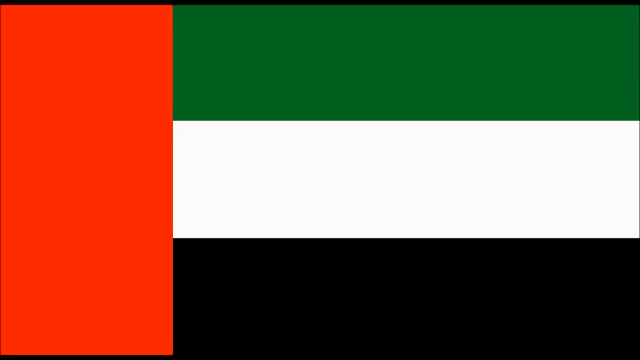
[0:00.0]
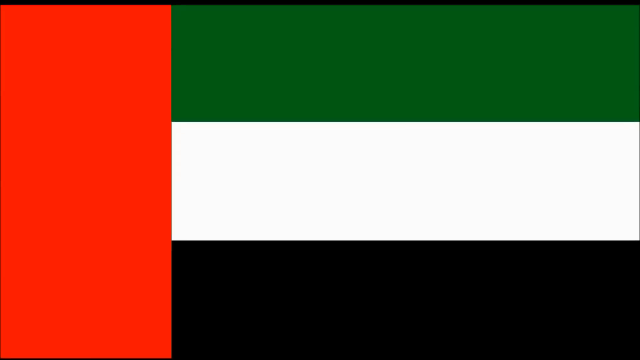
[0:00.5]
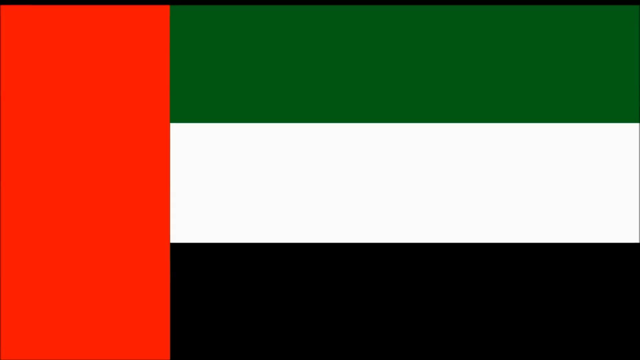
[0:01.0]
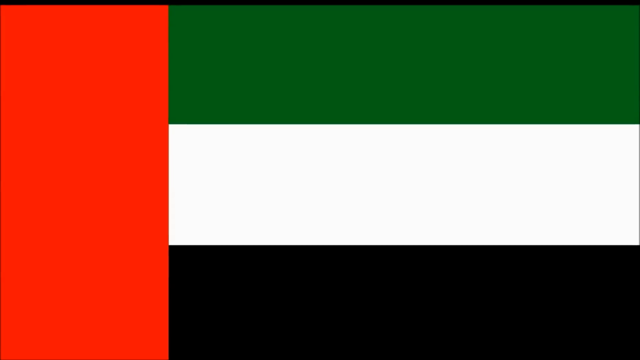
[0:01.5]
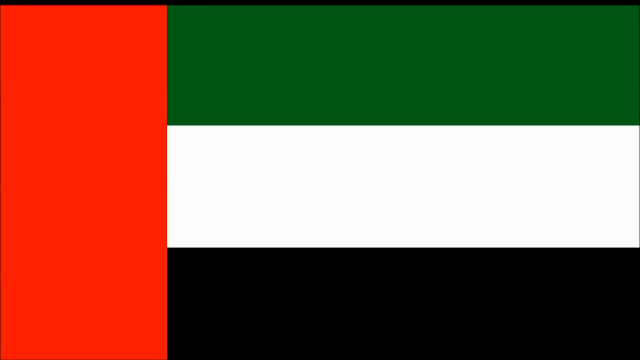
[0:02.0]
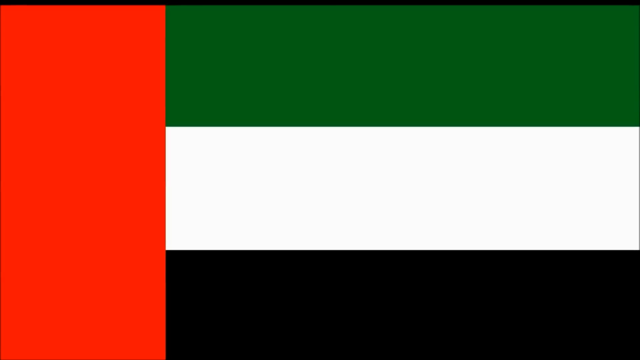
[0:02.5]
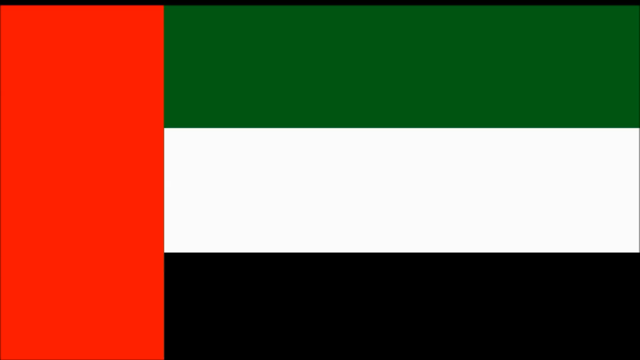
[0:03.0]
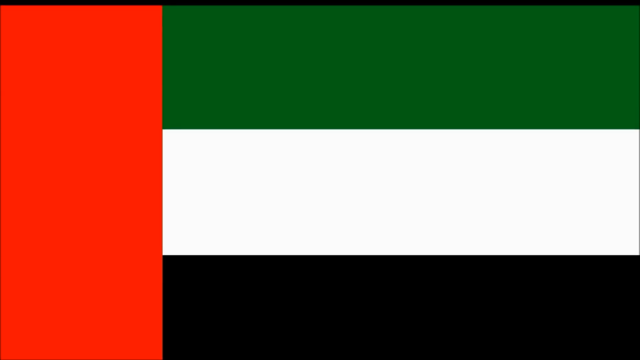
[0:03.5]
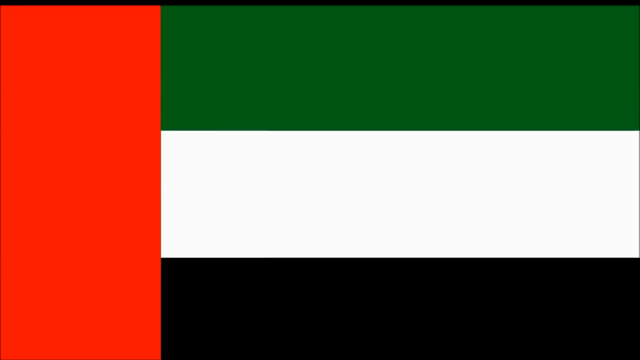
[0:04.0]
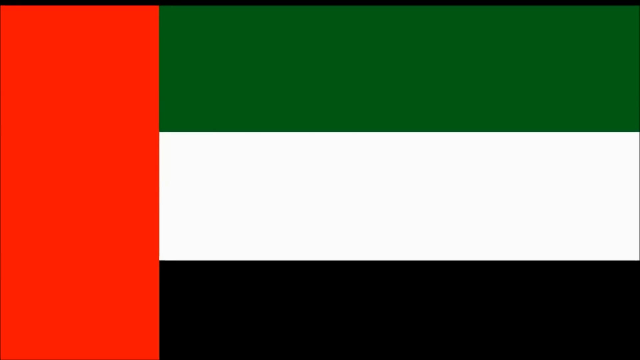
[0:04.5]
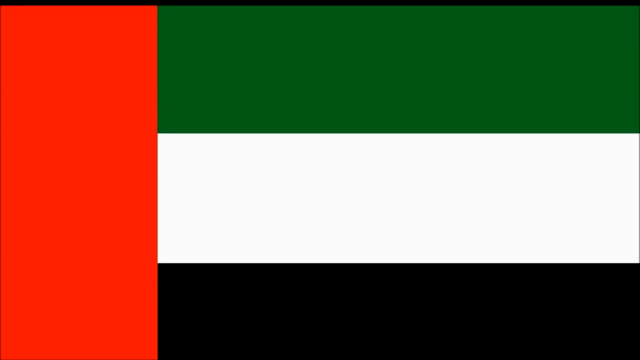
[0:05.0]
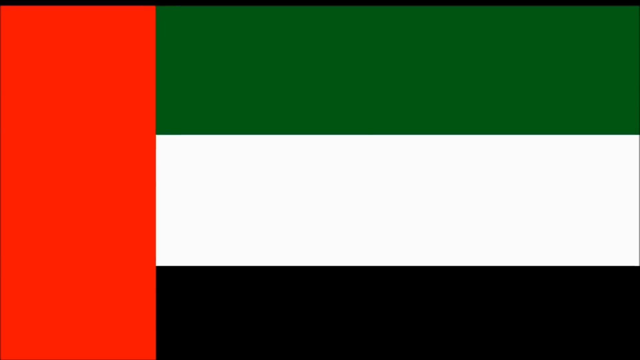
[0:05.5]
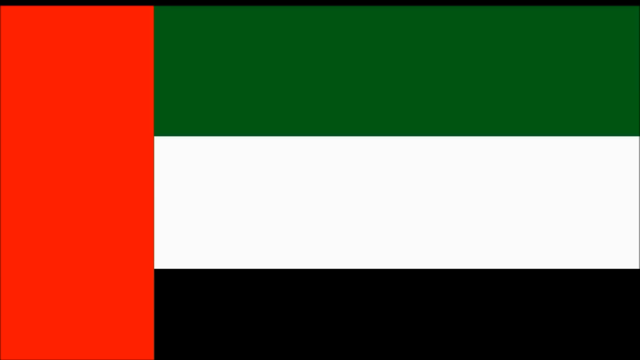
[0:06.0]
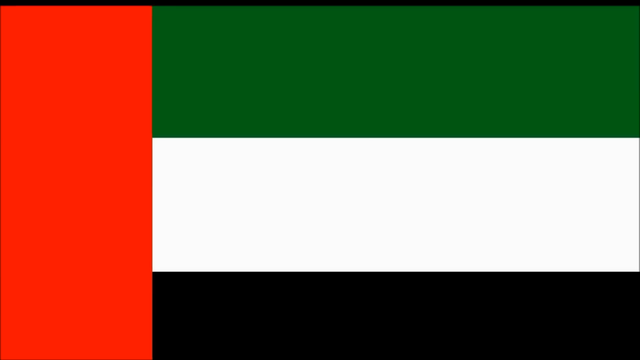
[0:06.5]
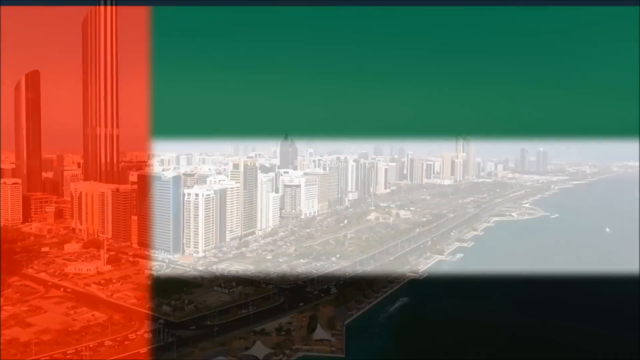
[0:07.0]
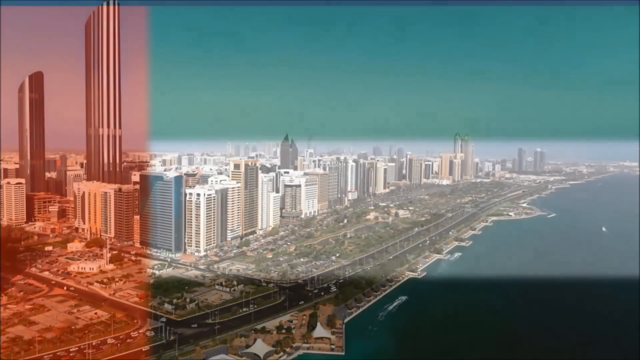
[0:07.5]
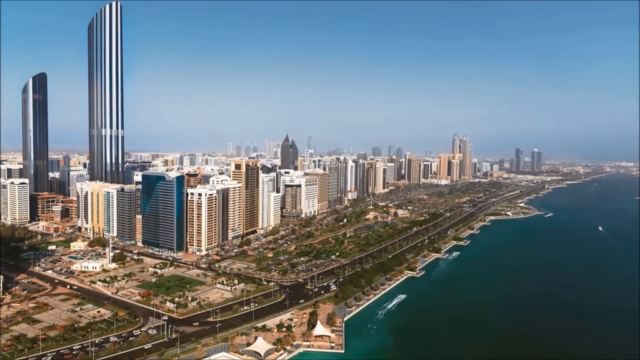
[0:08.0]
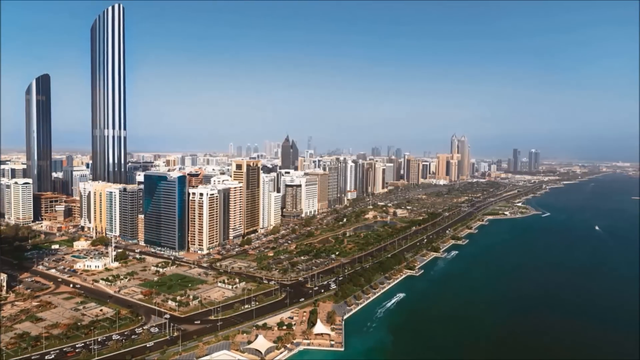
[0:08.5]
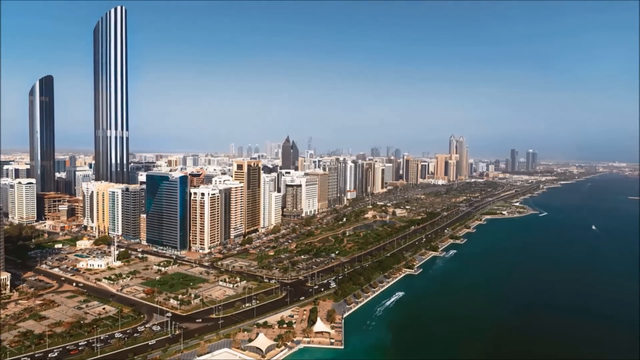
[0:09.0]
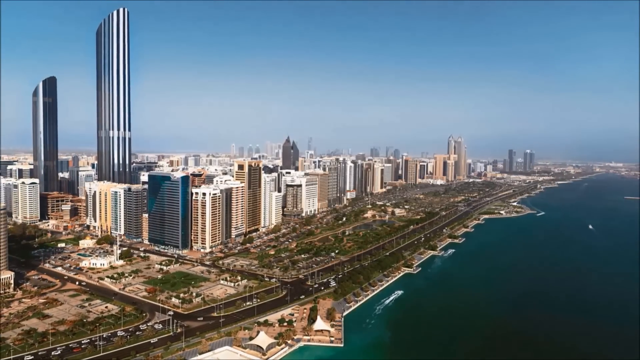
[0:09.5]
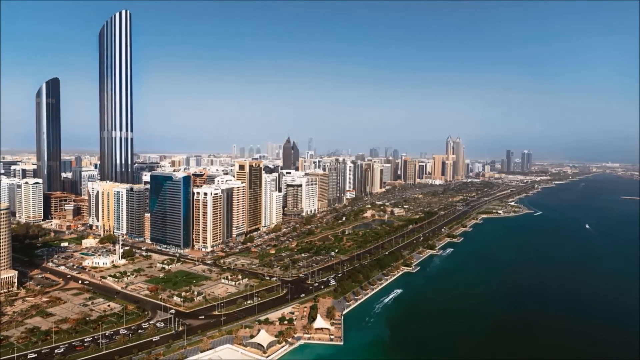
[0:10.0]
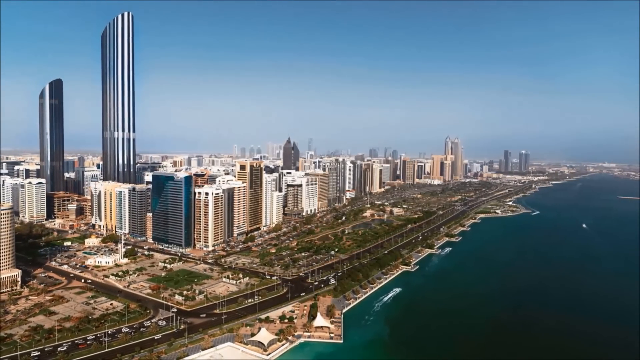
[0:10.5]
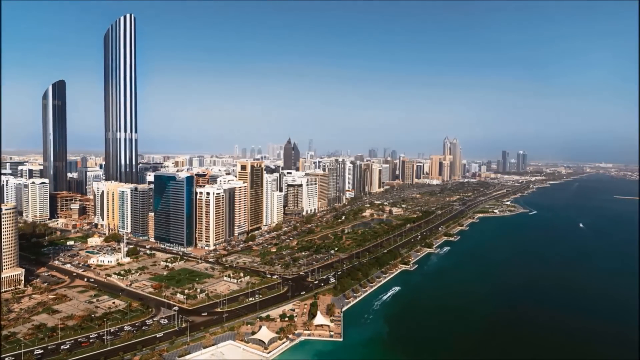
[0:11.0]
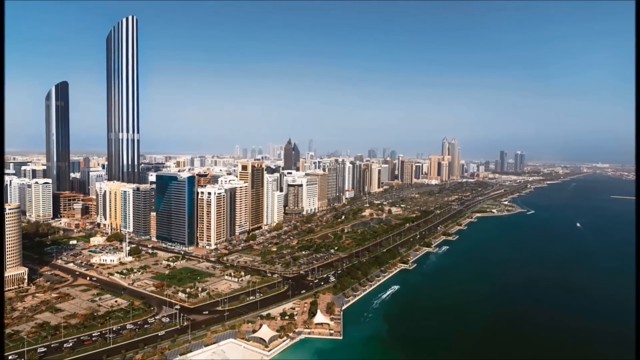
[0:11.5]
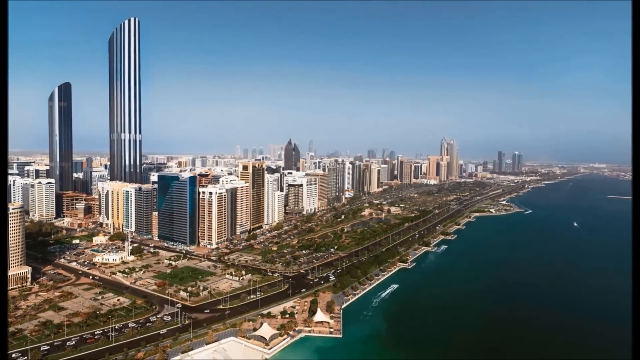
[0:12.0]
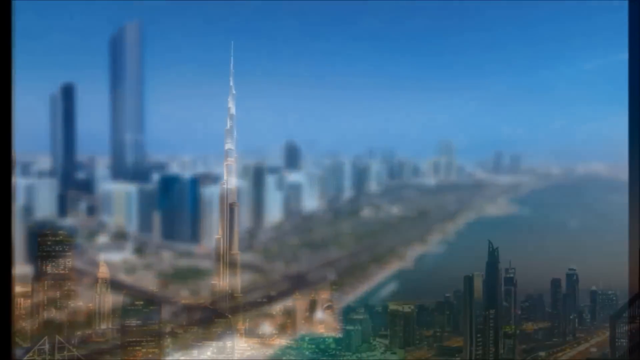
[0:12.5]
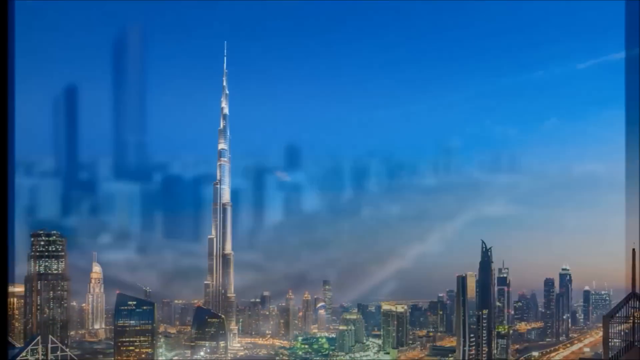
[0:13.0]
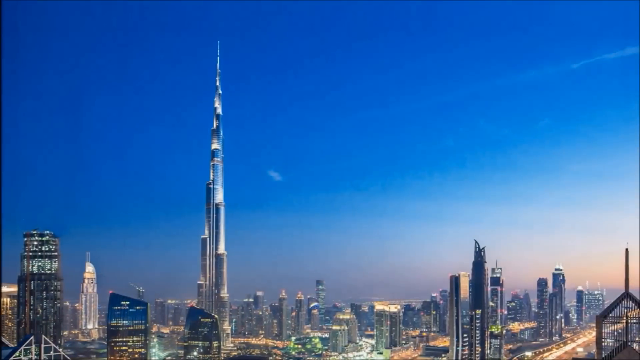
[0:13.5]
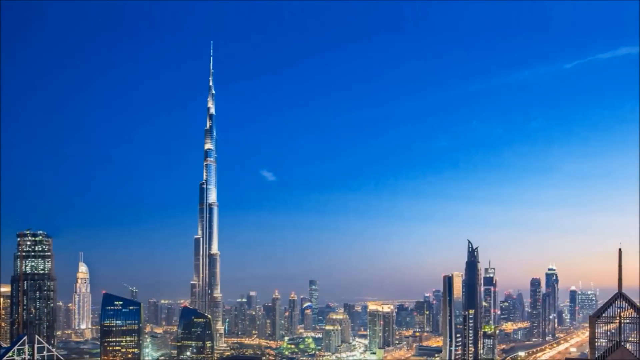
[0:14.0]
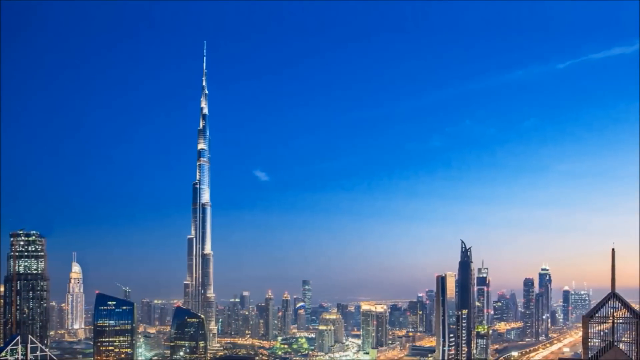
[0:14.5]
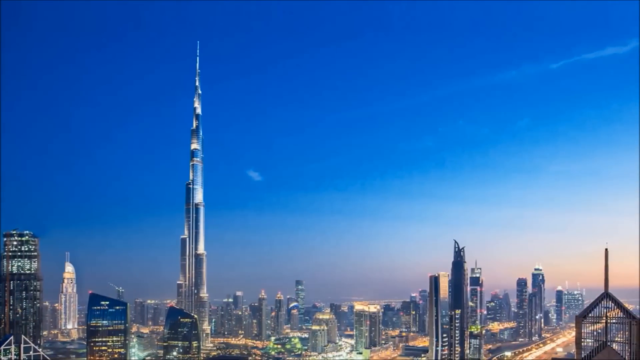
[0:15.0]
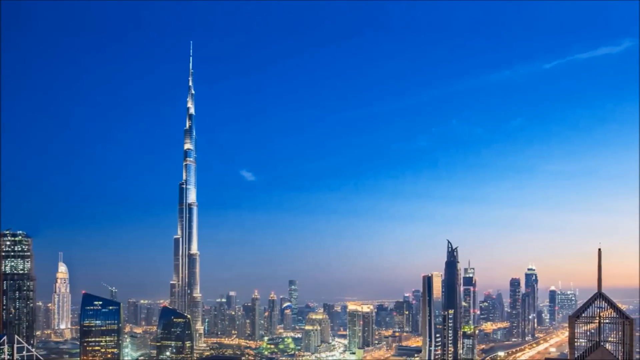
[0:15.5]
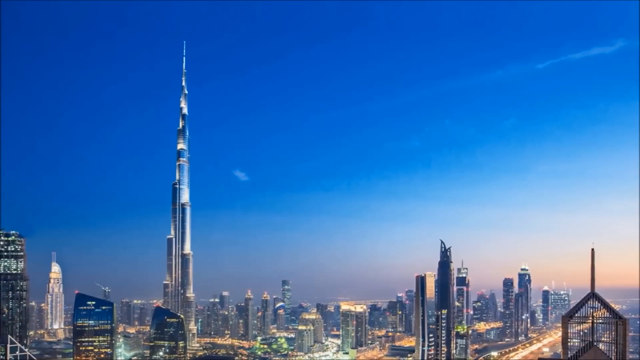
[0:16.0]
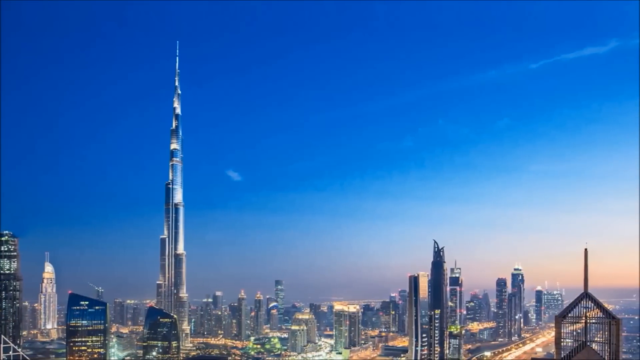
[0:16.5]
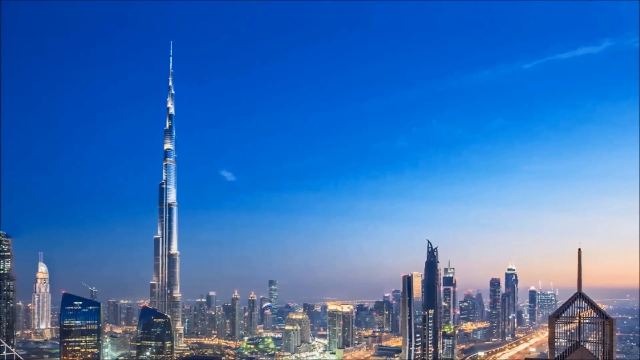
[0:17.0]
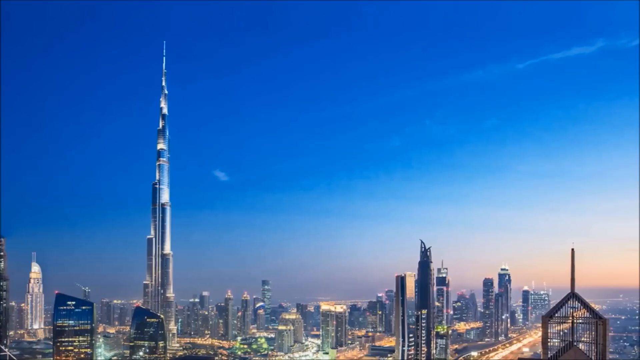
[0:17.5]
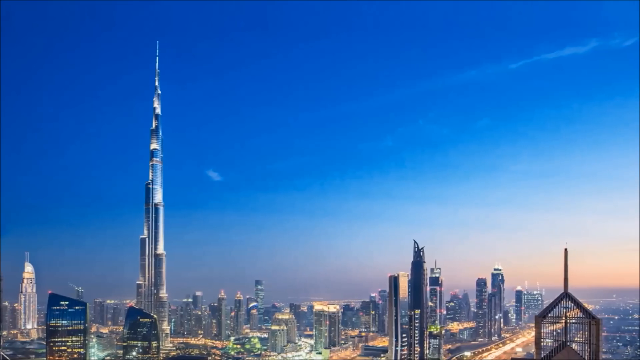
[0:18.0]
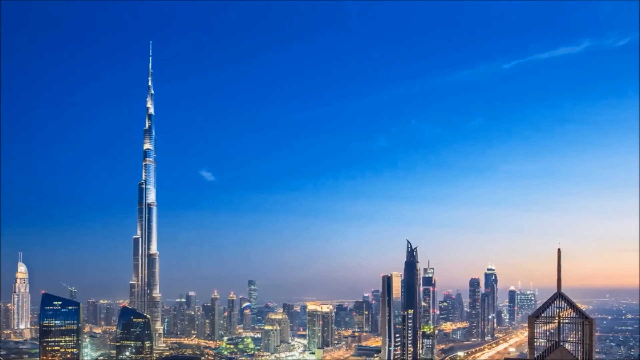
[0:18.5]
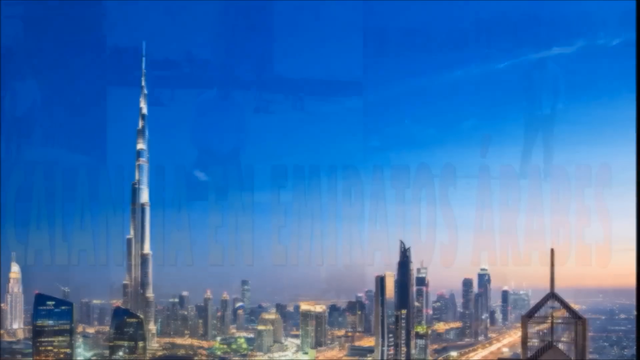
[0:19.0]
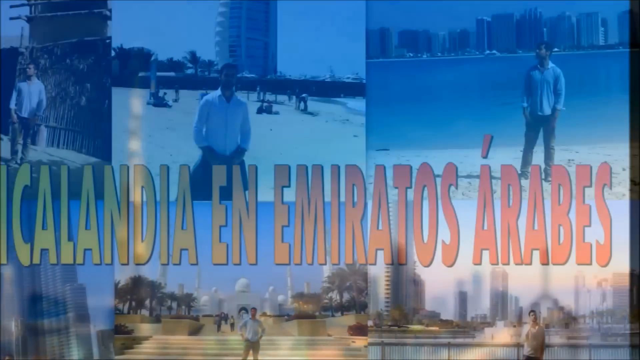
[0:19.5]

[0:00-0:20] A red, green, white and black flag appears, and the video zooms in on it before showing a picture of a city. Another picture of a city follows; it may be the same city or a different one, since the first picture shows a city by the coast while the second has a very tall skyscraper-like building not noticeable in the first. After the two city pictures, what looks like Spanish text appears along with pictures of people, either residents of the cities or country or tourists who have traveled there. The people look like they are either Indian or Hispanic.